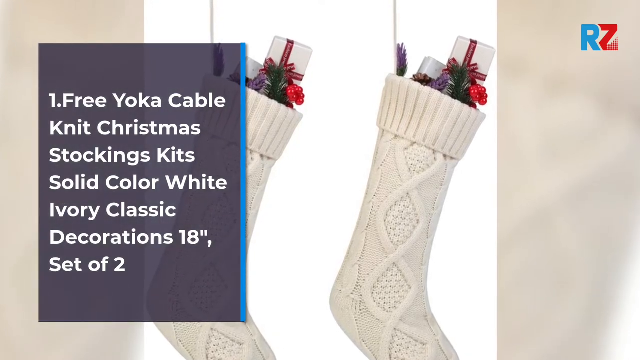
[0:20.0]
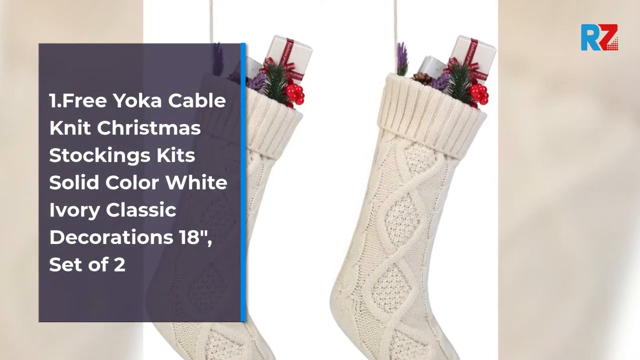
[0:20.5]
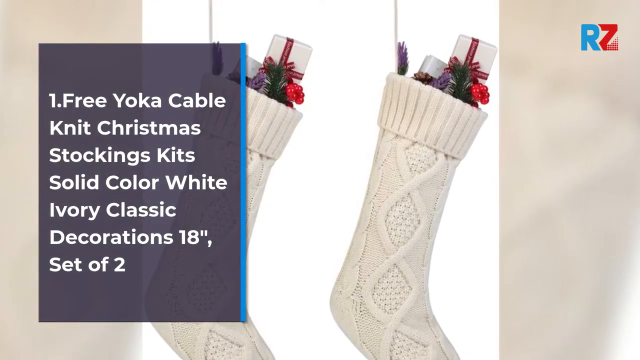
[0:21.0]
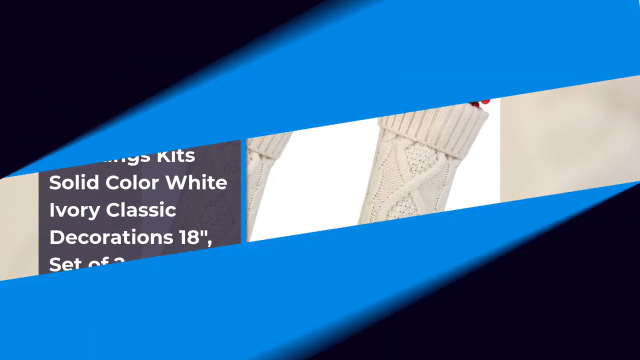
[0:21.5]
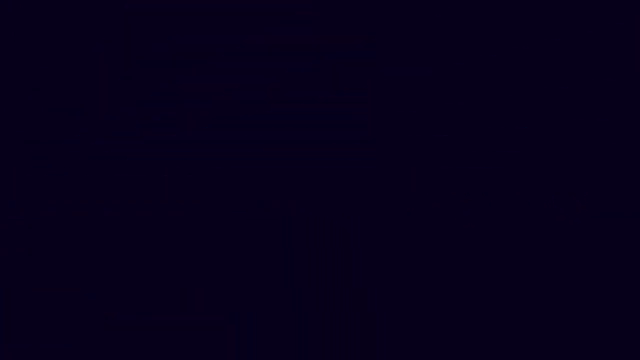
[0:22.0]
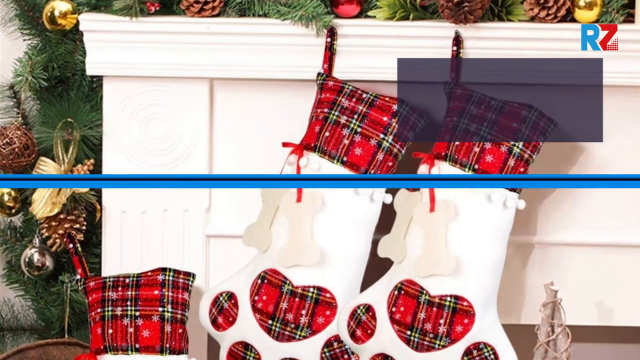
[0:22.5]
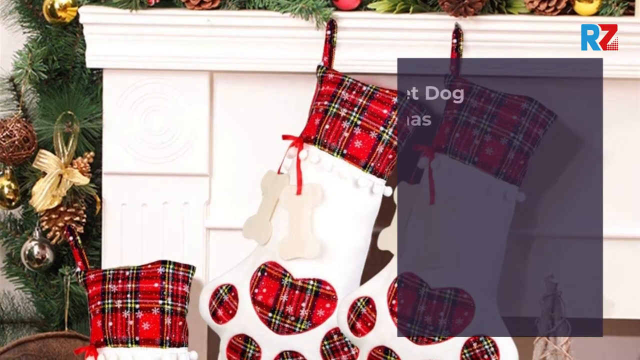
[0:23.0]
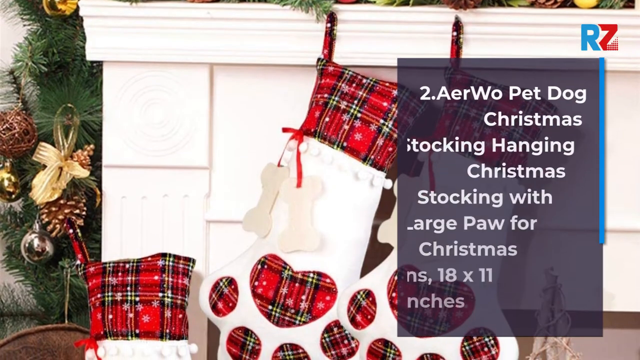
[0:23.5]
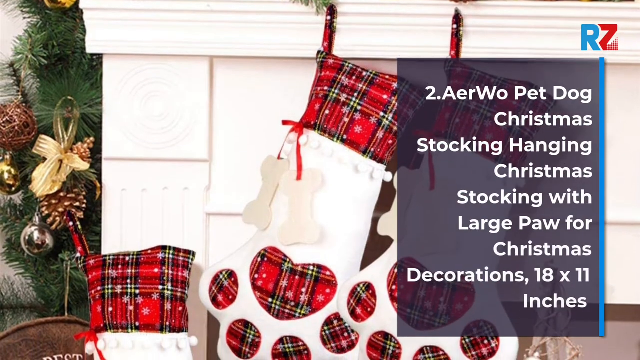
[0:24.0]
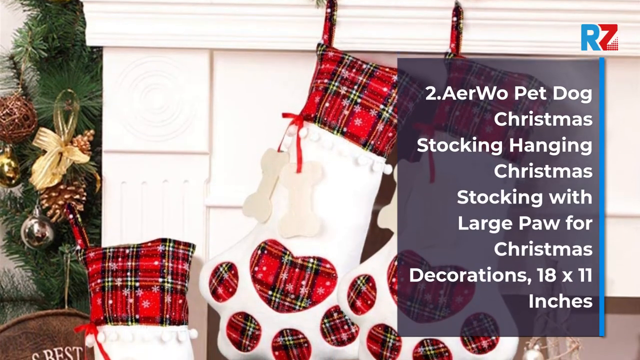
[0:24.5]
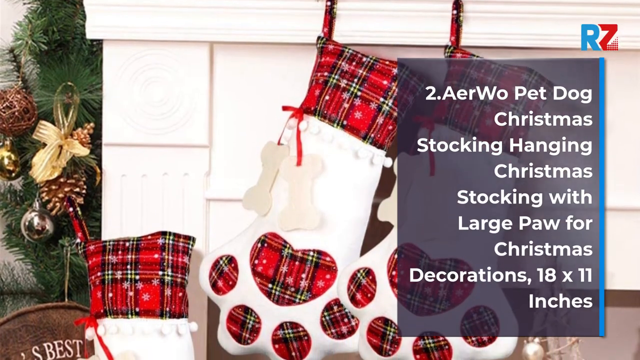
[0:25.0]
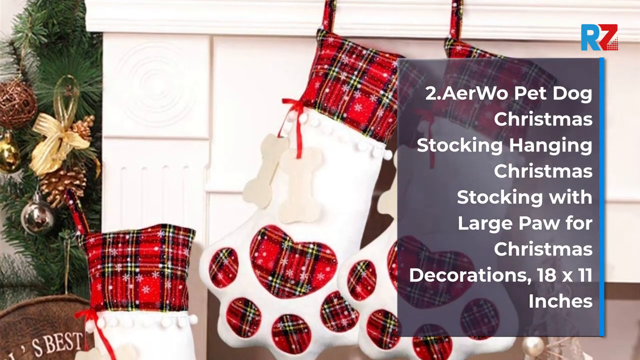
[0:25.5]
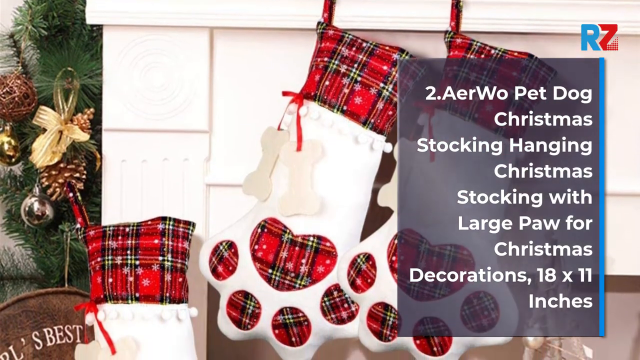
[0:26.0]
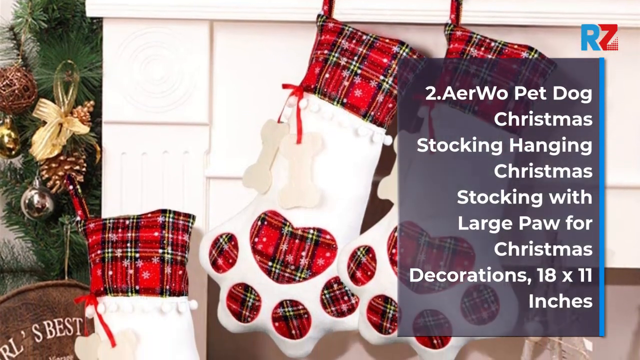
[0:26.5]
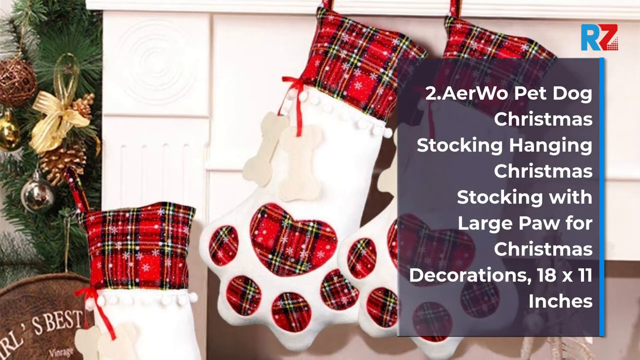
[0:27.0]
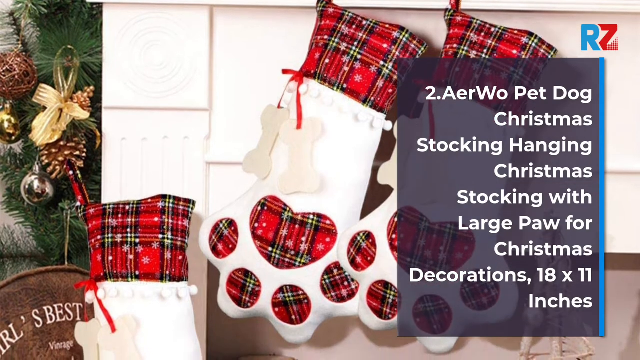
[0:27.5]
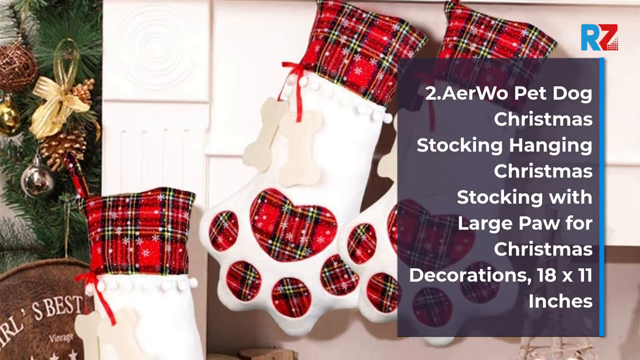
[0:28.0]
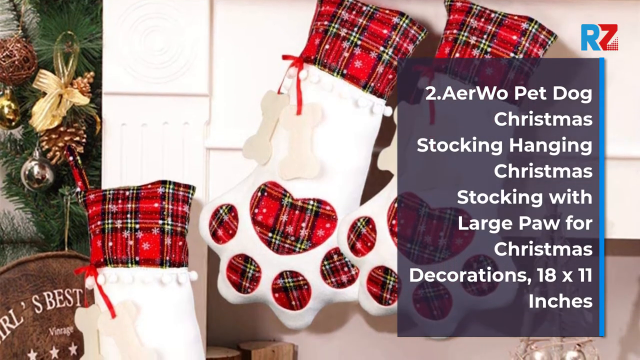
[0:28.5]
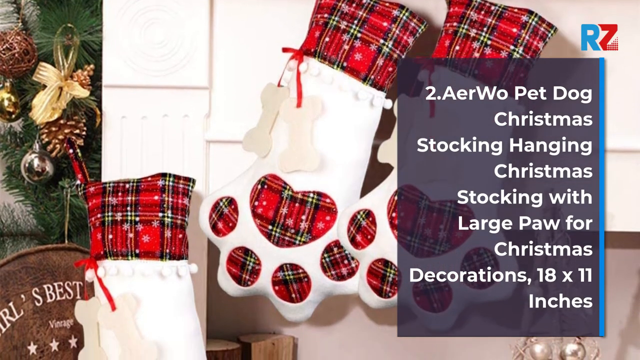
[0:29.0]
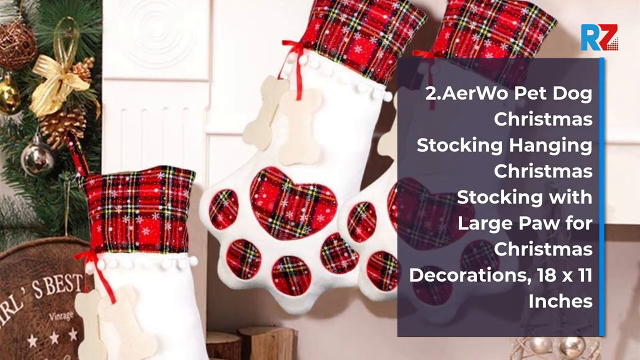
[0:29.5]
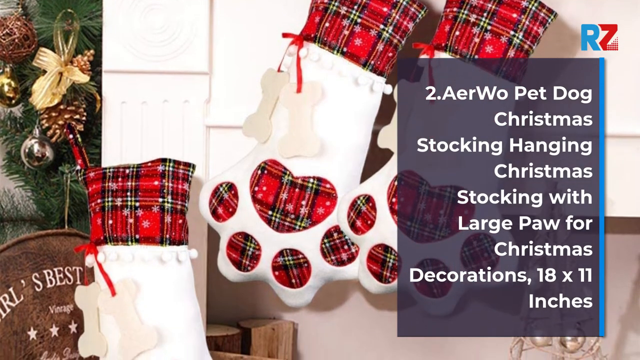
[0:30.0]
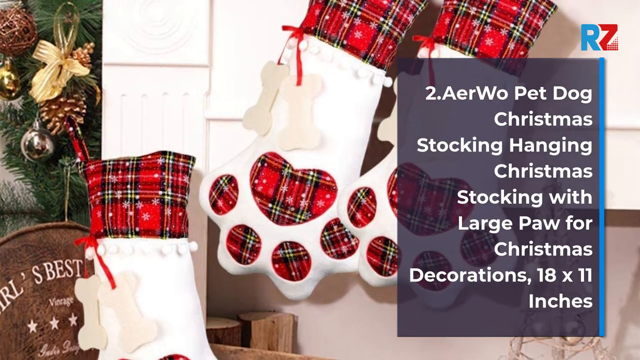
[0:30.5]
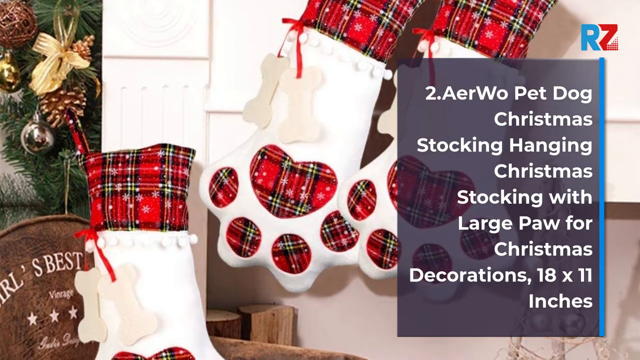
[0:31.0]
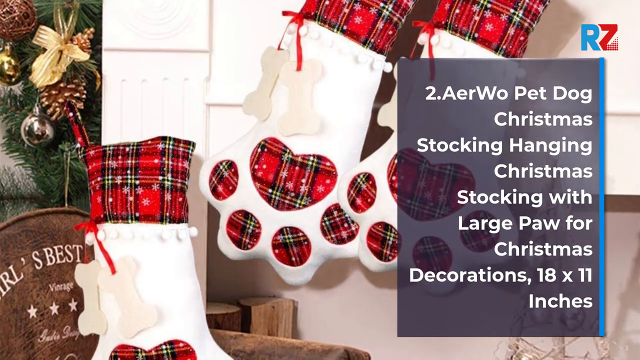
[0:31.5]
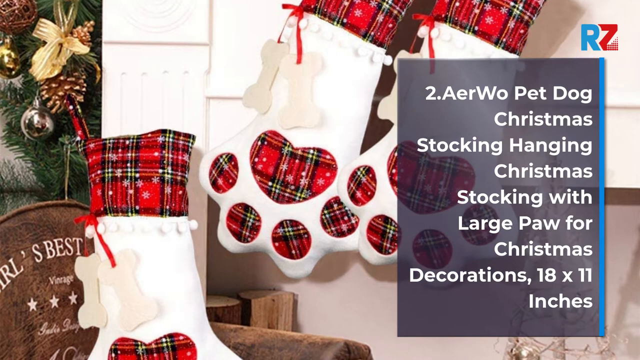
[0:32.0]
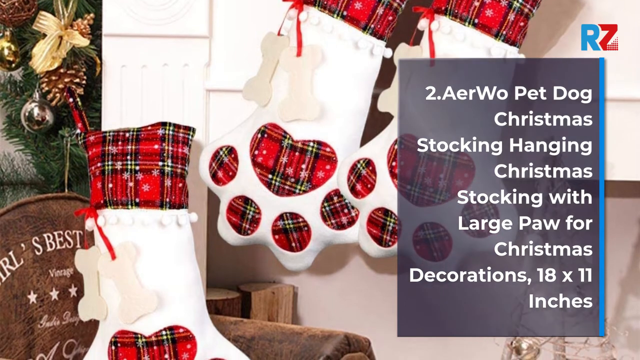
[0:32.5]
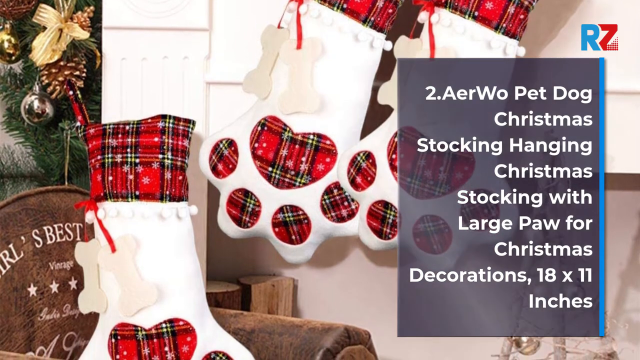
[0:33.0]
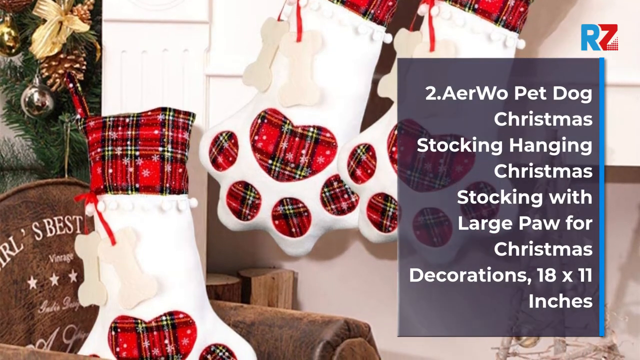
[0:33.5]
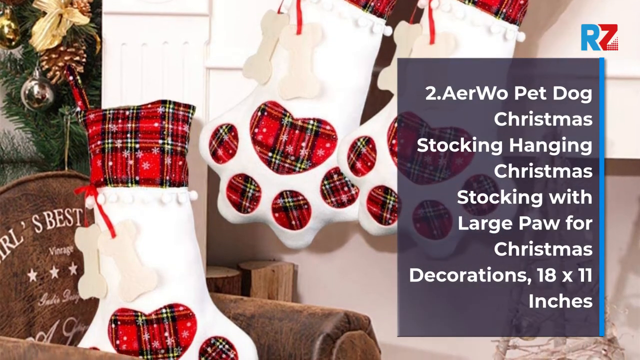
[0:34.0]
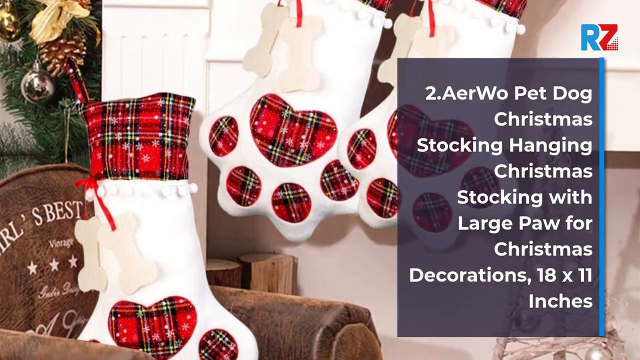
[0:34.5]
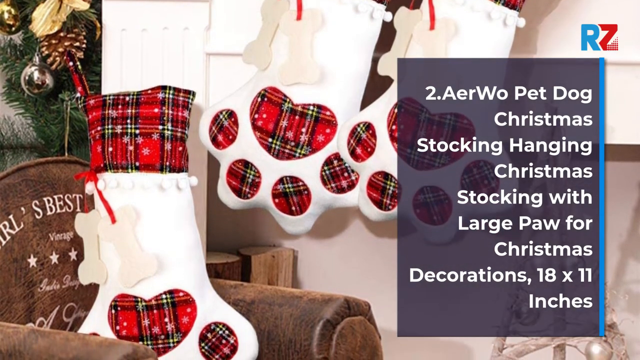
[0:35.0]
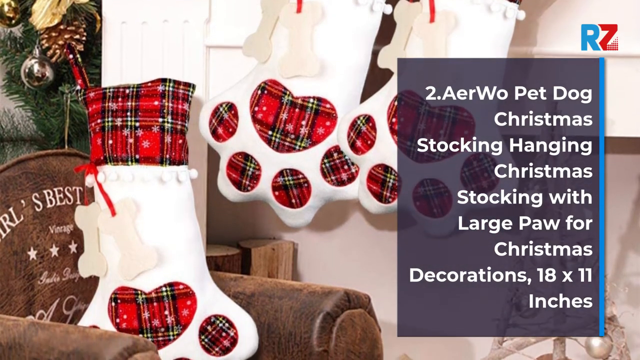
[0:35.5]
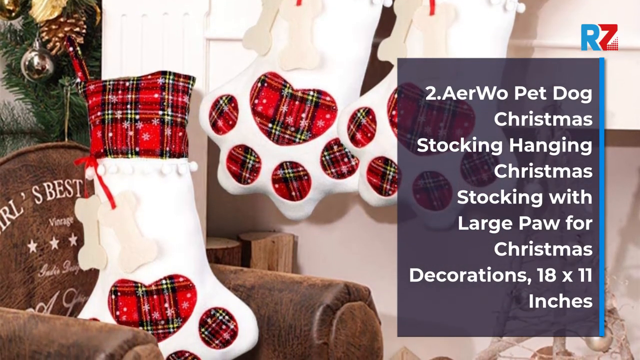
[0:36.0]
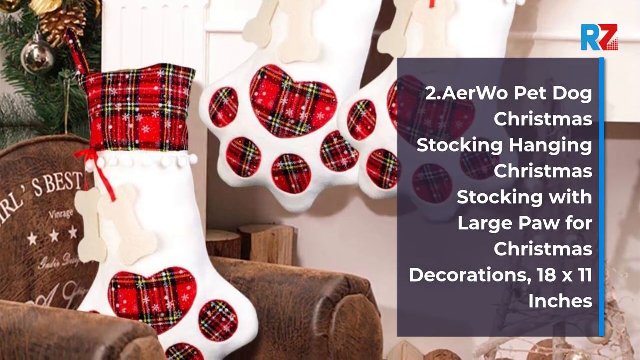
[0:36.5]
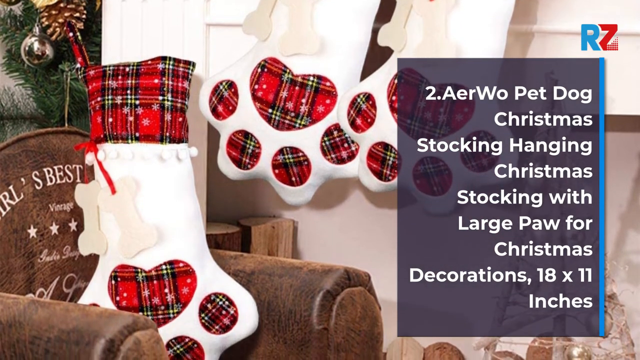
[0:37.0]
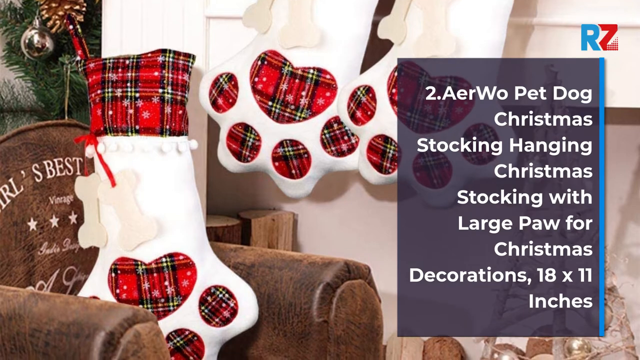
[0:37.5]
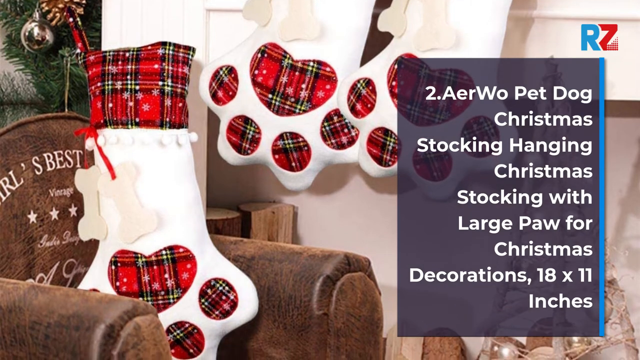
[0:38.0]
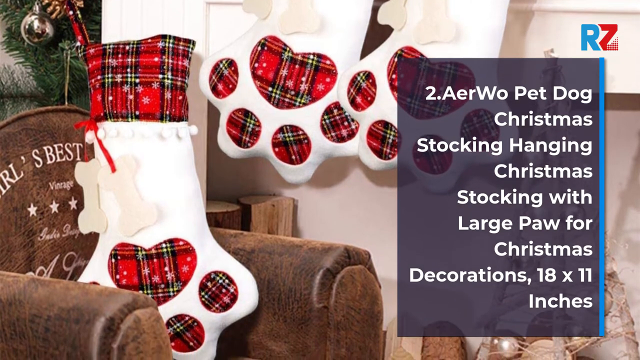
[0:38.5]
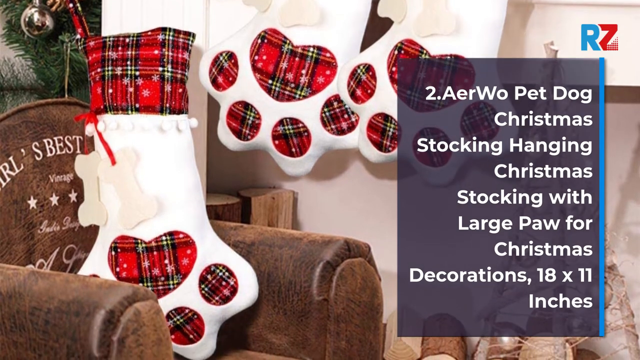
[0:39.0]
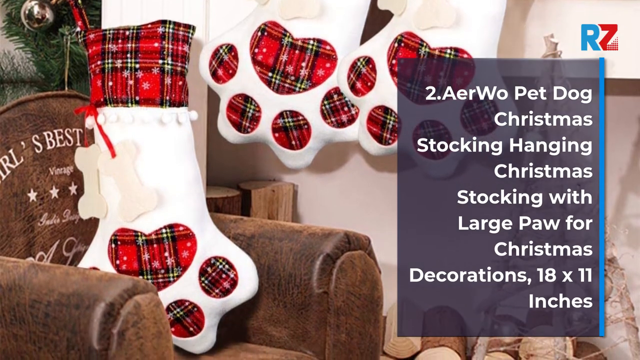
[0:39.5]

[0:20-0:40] Number two is a Werewolf pet dog Christmas stocking, a hanging Christmas stocking with a large paw for Christmas decorations, 18 x 11 inch. There are bones, and these stockings are just dog paw prints rather than socks. The paw prints have a Christmas threaded design that is red and crisscrossed with little snowflakes on top, in red and white. There are three of these stockings in total, and one is displayed on a couch made of dark leather. The text says "vintage" with five stars, and it possibly says "girls best couch".